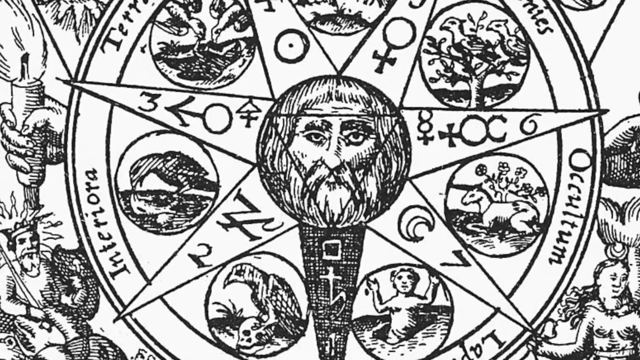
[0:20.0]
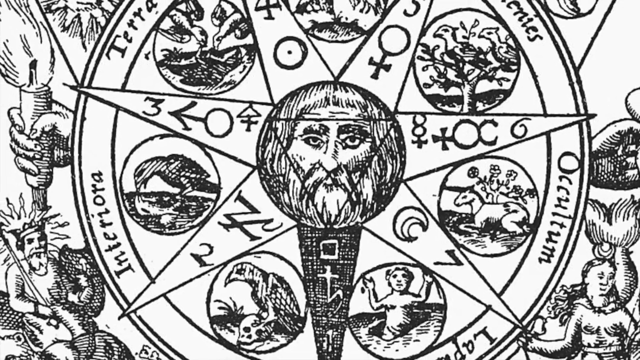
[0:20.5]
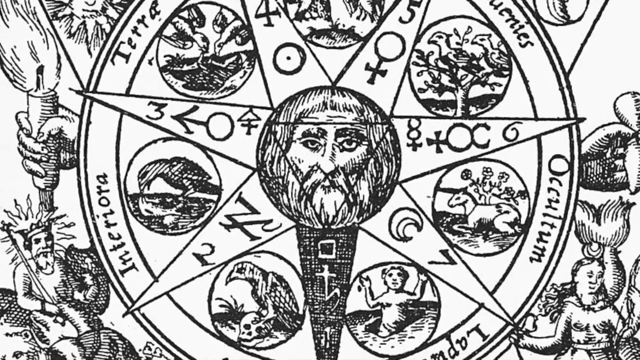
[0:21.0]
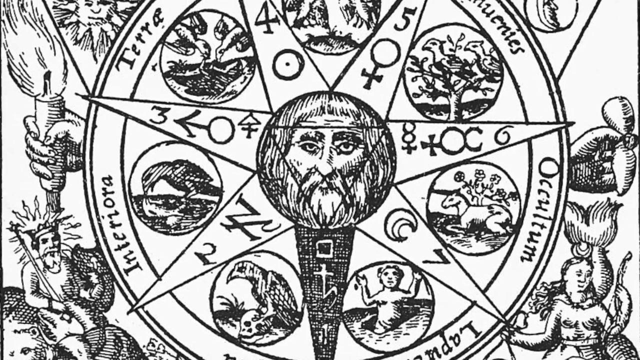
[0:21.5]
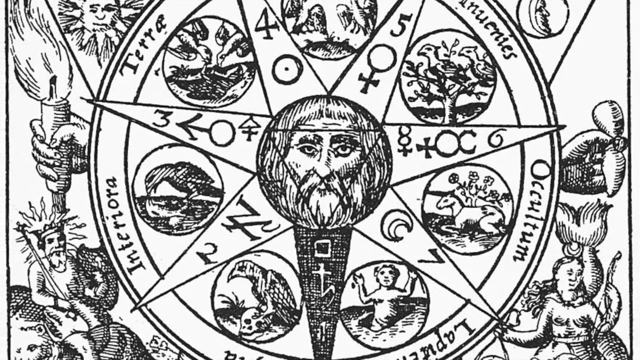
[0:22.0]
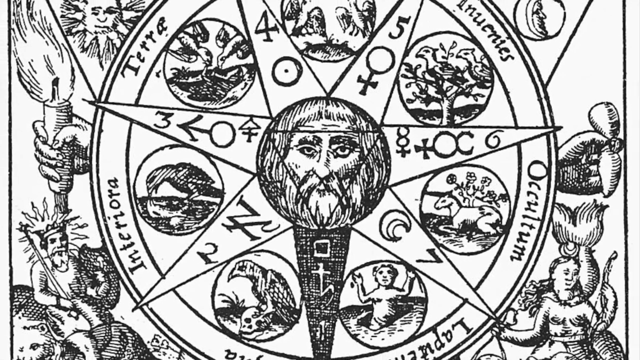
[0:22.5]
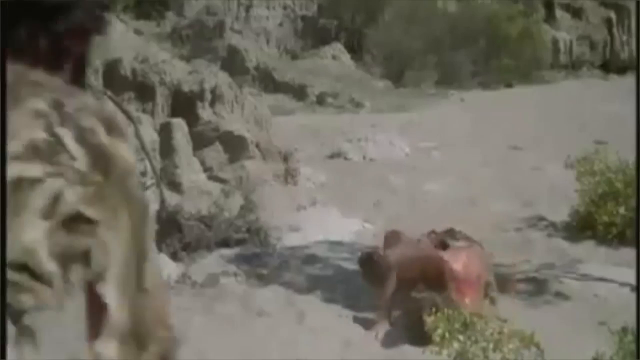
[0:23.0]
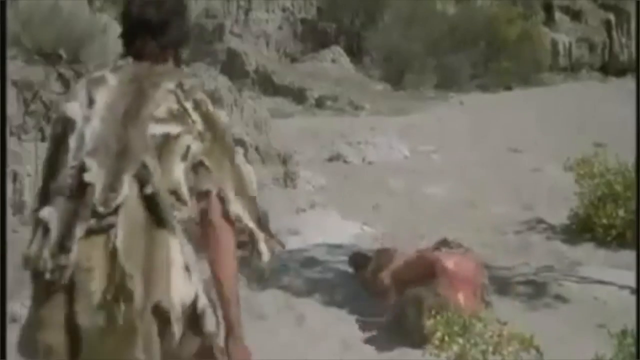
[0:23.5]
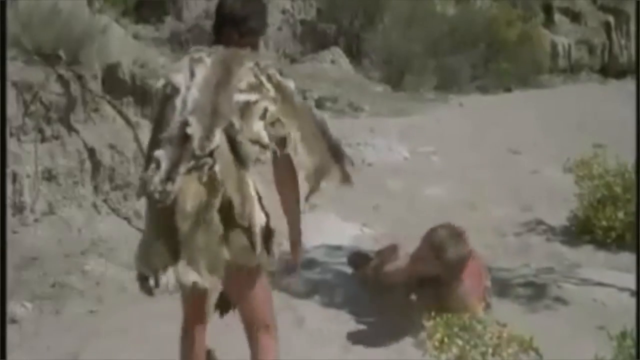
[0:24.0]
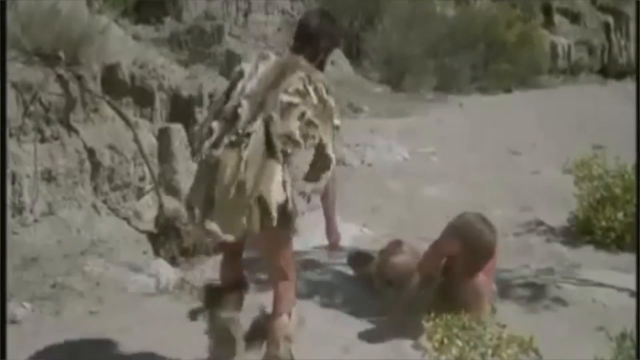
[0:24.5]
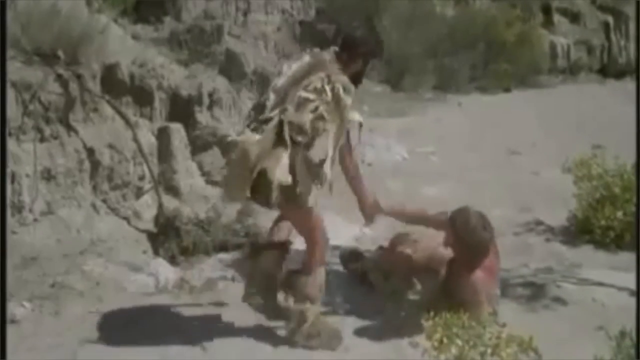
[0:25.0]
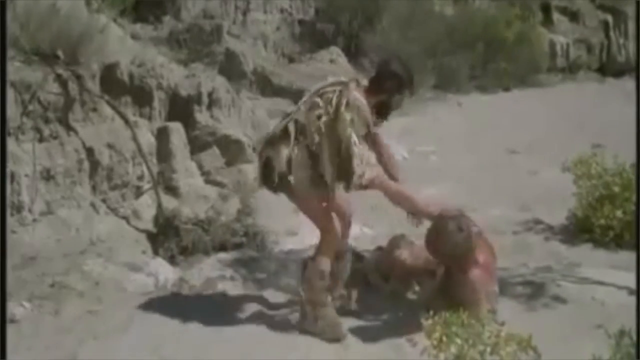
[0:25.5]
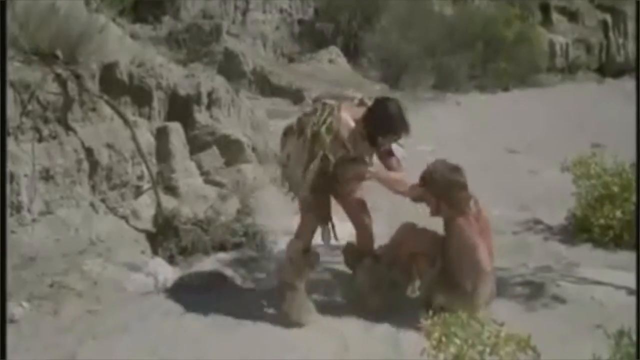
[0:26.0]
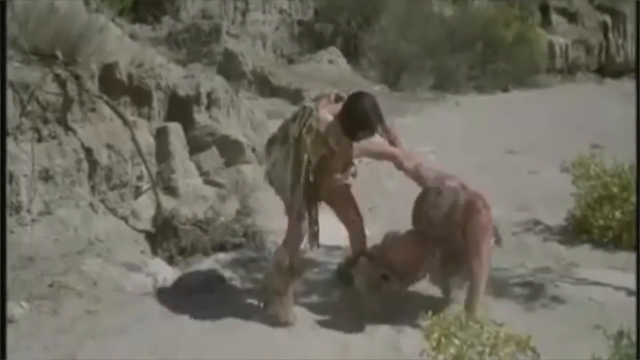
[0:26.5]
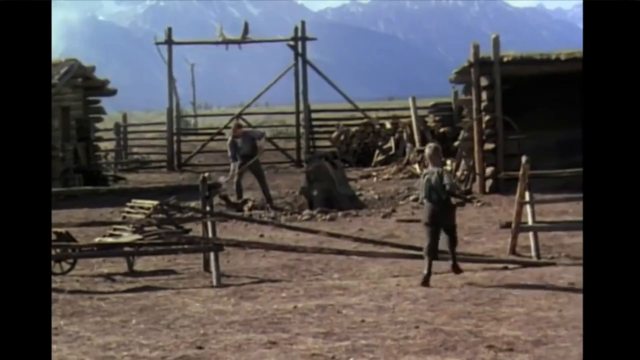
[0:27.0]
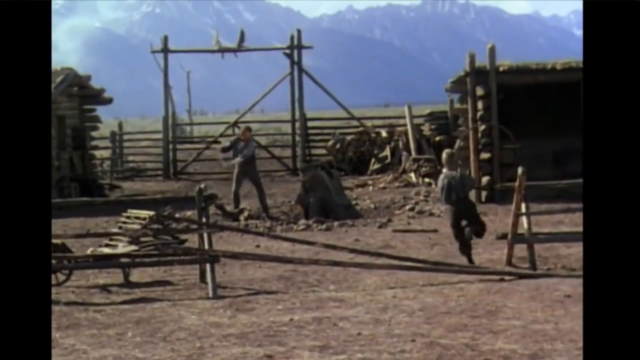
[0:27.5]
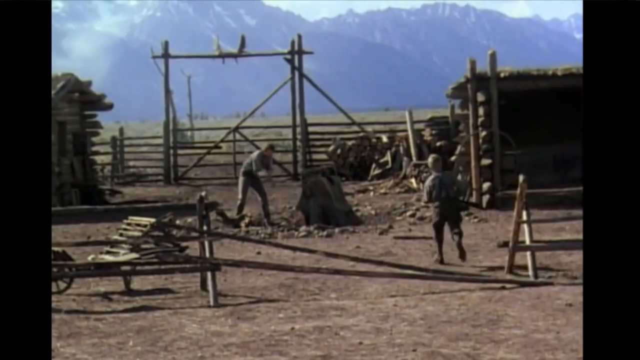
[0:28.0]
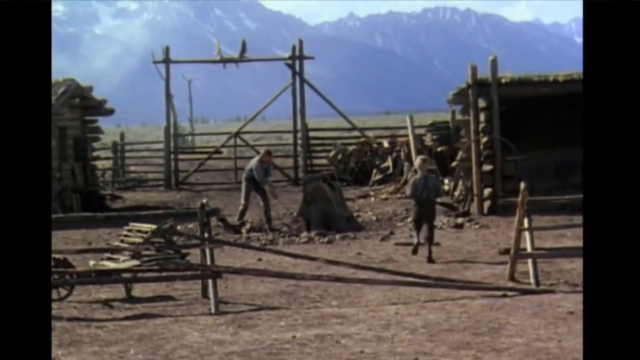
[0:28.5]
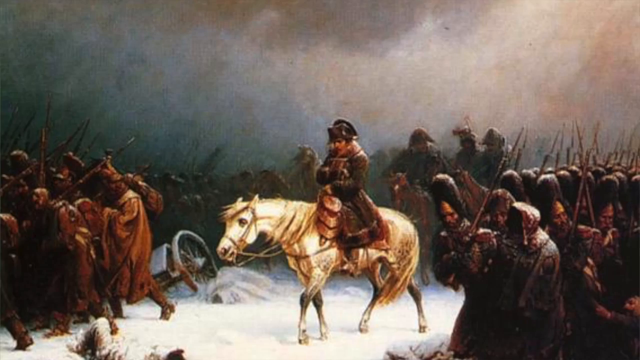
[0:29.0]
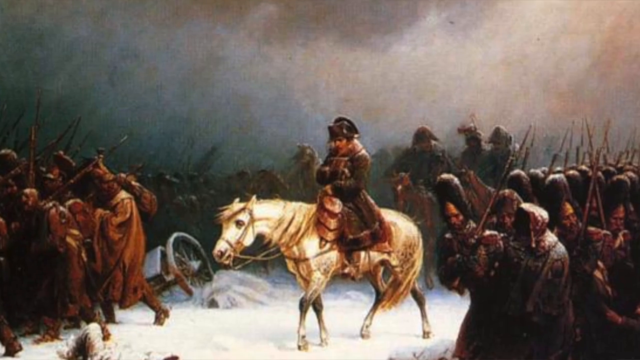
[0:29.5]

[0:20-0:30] A hand-drawn black-and-white image shows something kind of like a star with a man's picture in the middle, inside a triangle, and circles going around it. Suddenly a person runs to catch or help someone who has fallen down, in what almost looks like a slippery area. Someone is then shown chopping wood. An artistically drawn picture shows a man on a horse with soldiers in the background, possibly a war scene.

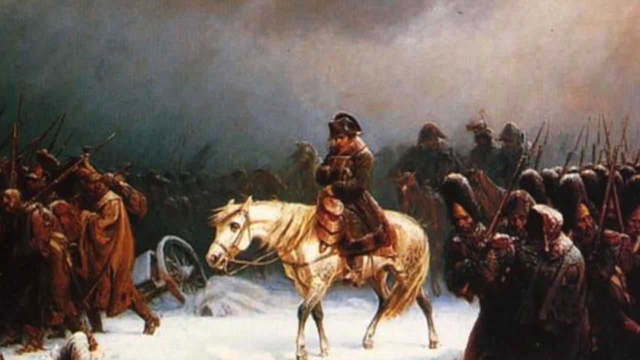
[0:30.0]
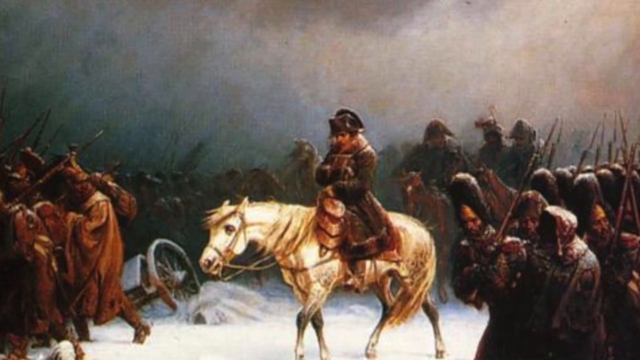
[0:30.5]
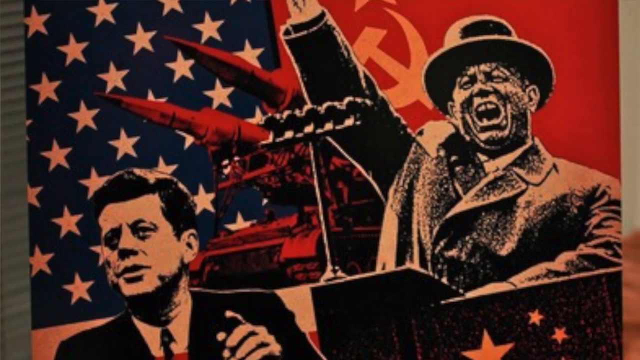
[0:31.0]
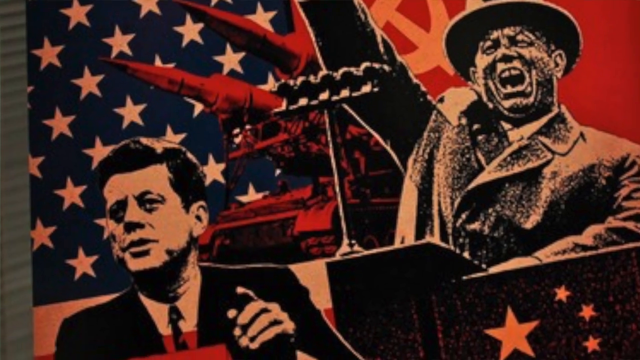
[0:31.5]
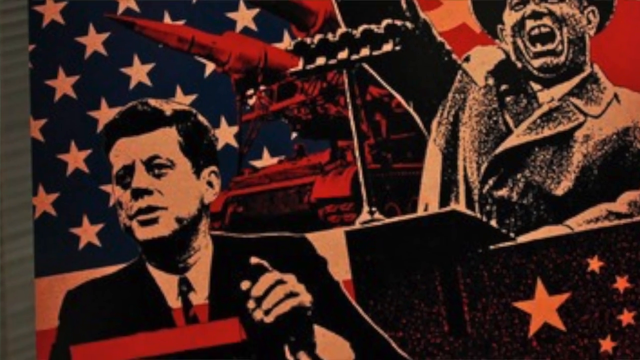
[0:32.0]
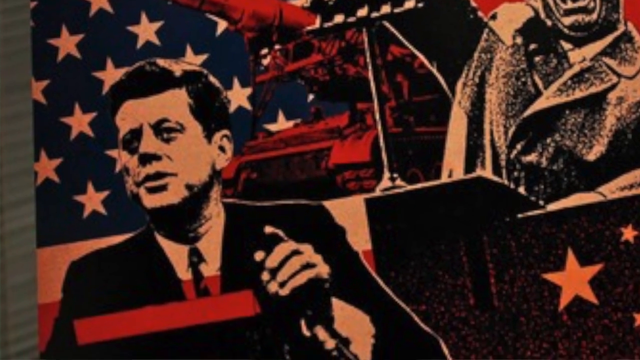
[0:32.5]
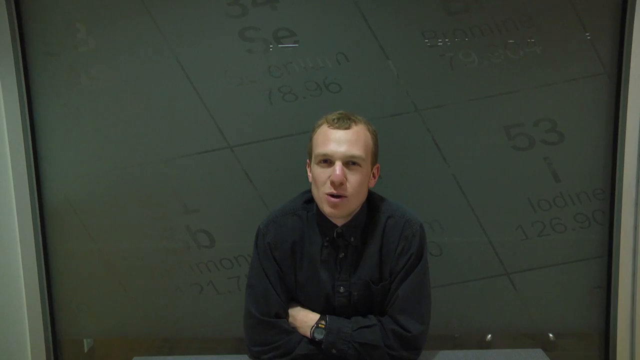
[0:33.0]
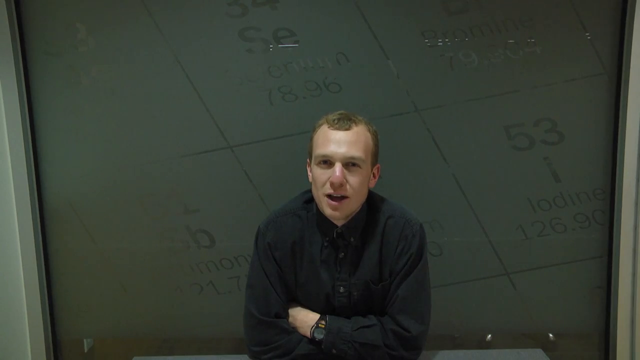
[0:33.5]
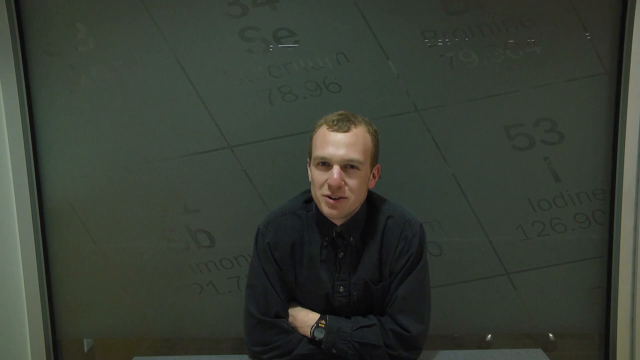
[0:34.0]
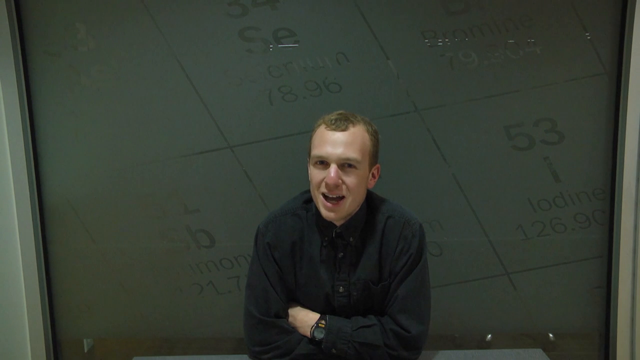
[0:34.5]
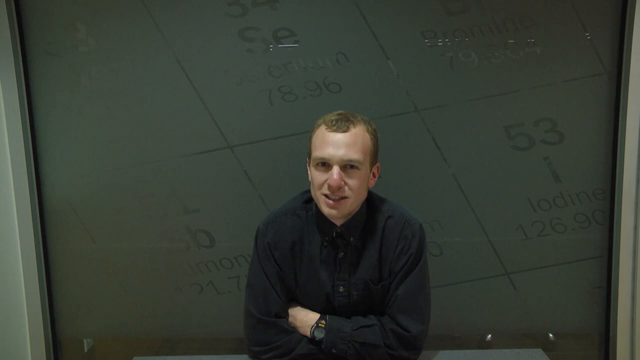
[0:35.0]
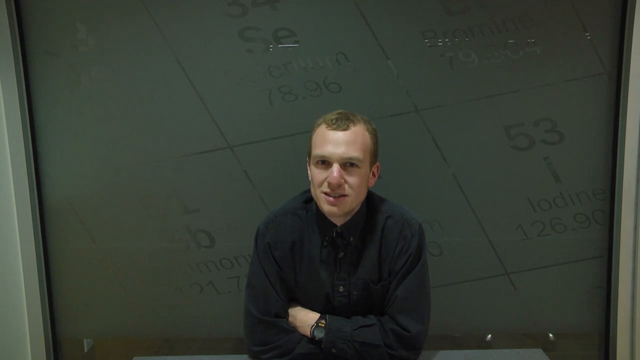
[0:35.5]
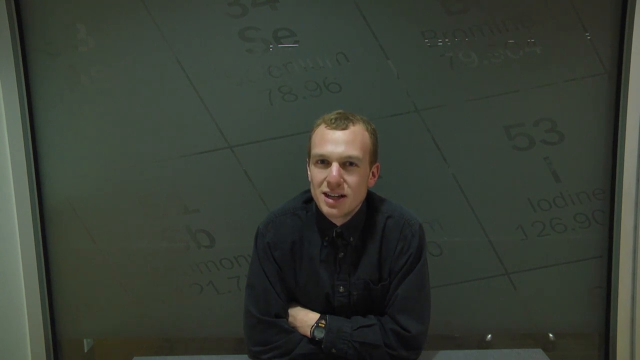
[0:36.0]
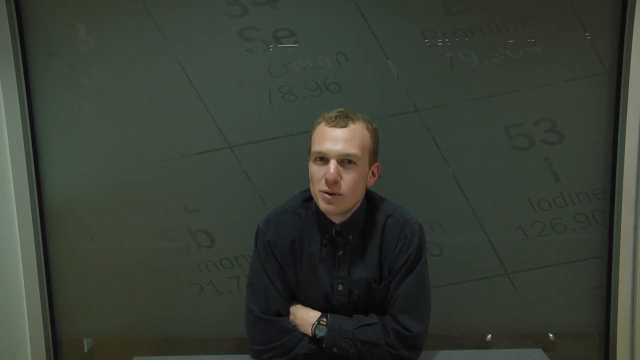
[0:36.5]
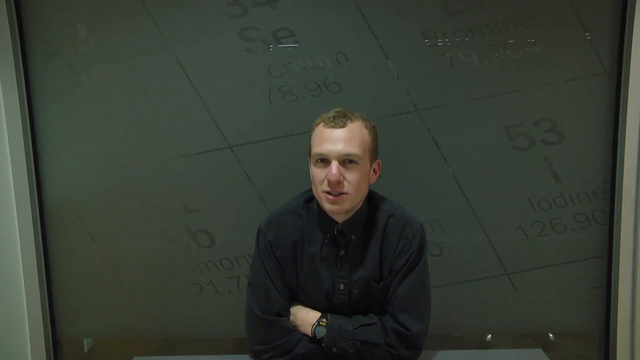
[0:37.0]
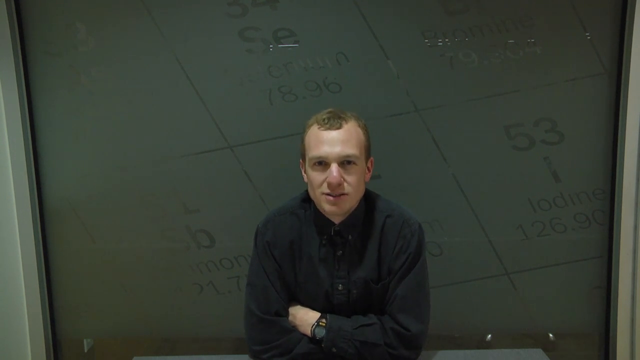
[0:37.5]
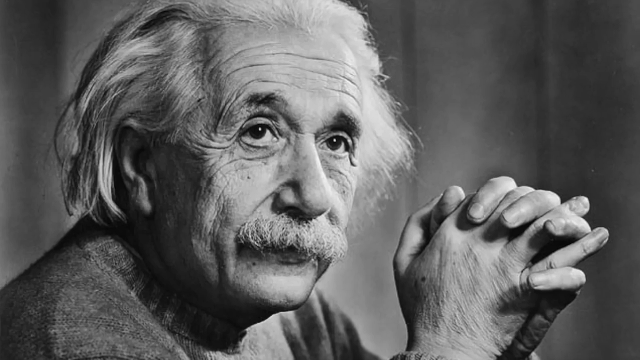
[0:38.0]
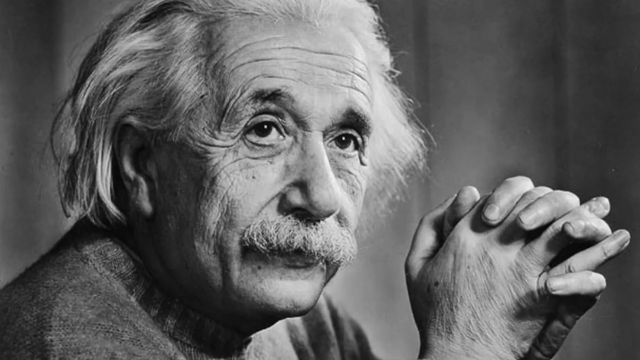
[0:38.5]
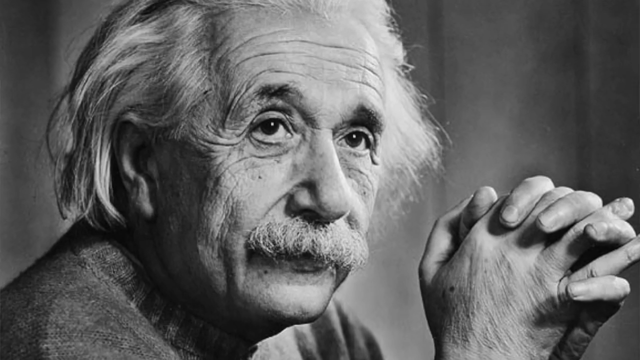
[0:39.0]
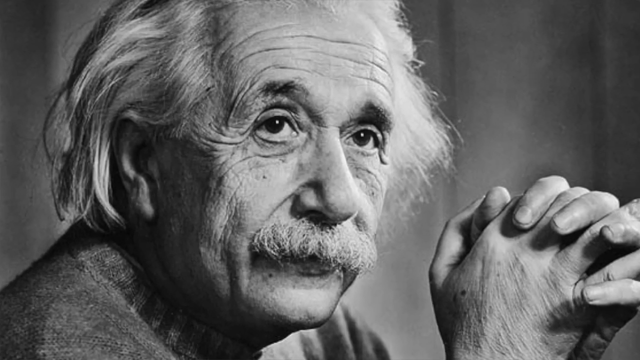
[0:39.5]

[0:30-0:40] An artistically drawn picture shows what looks like a general riding a horse. The horse is kind of beige, and the man wears what looks like a winter coat, seemingly from wartime. Various men, apparently soldiers, are lined up behind him with their rifles held up pointing towards the air. Next comes a picture of John F. Kennedy near an American flag, then a shot of a man talking, and then a black-and-white picture of Albert Einstein with a universe in the background.